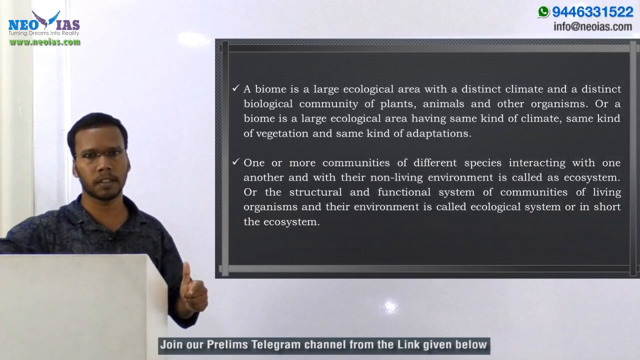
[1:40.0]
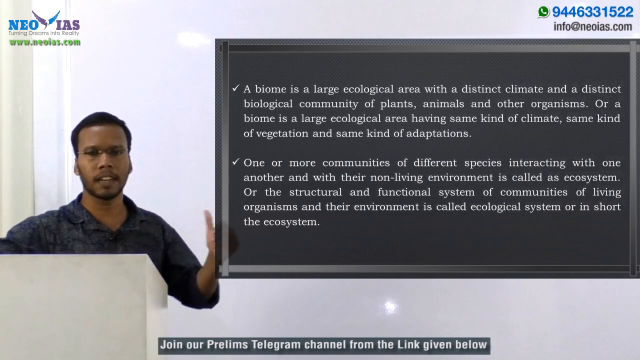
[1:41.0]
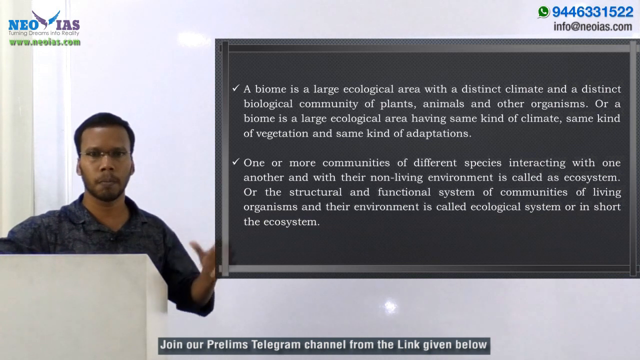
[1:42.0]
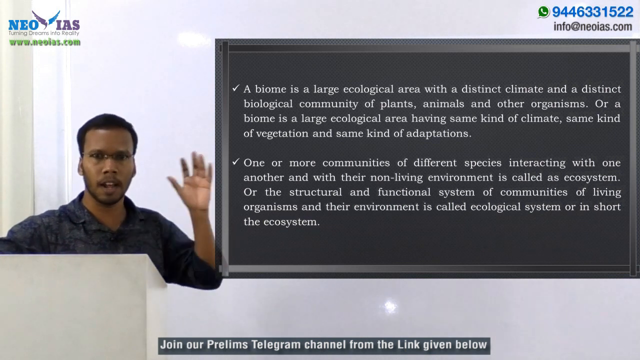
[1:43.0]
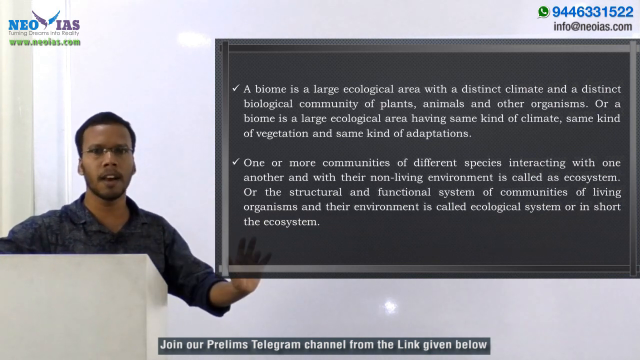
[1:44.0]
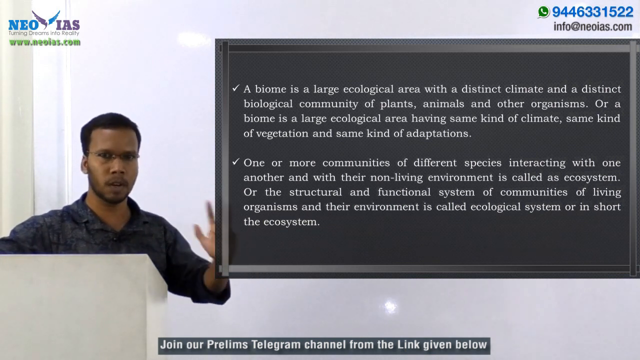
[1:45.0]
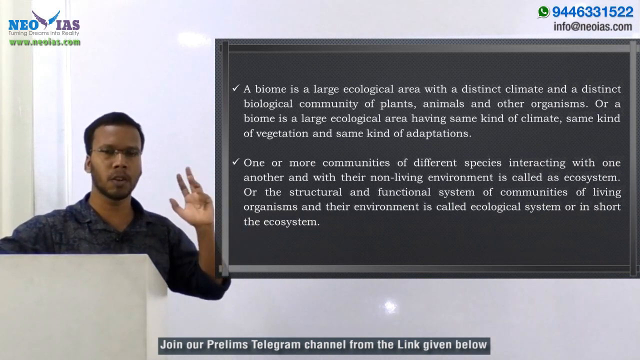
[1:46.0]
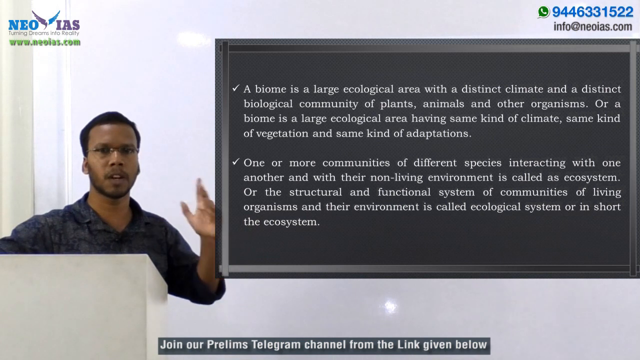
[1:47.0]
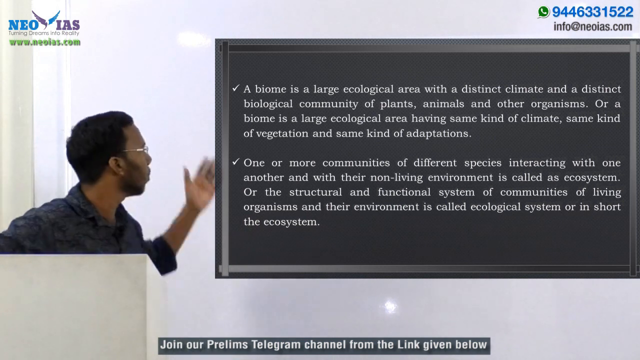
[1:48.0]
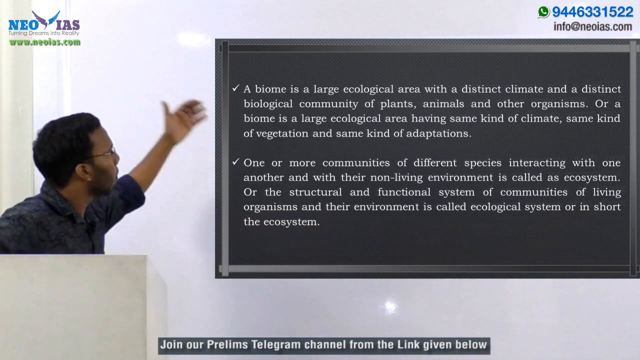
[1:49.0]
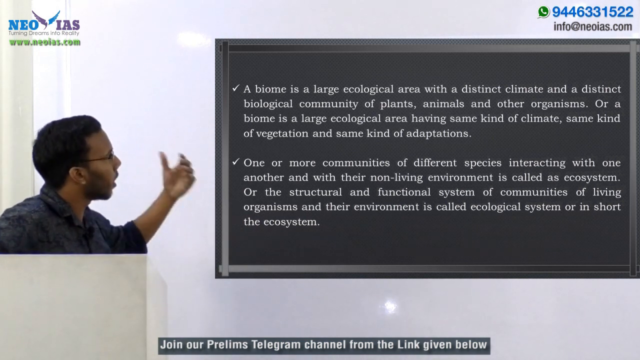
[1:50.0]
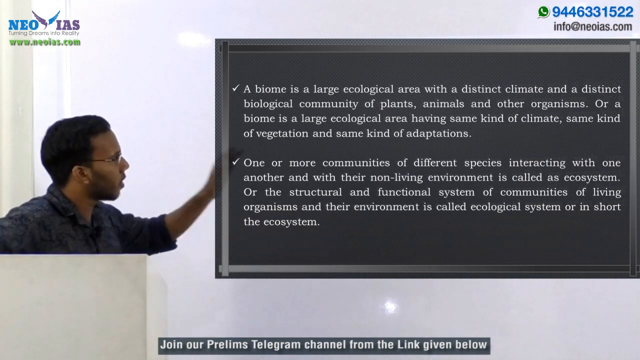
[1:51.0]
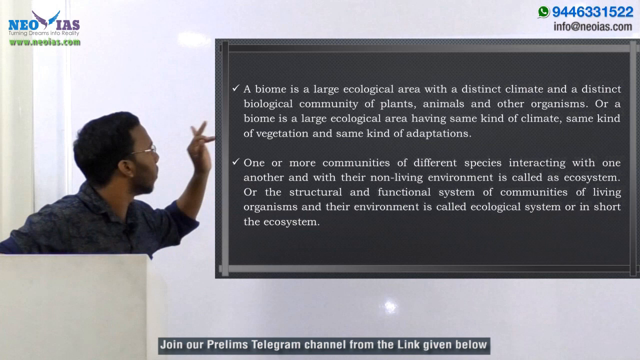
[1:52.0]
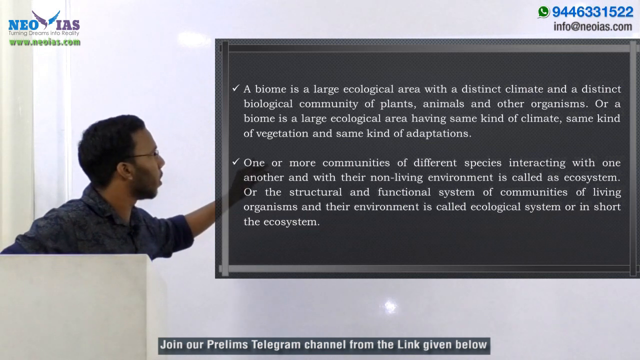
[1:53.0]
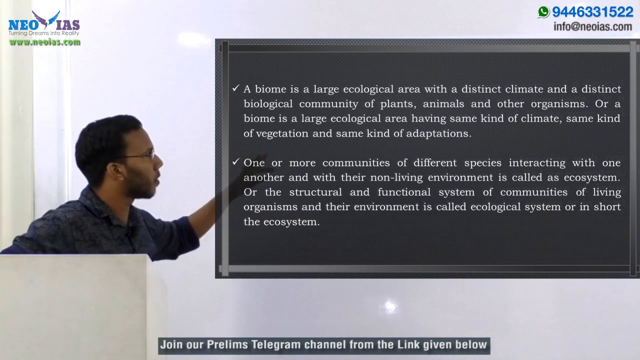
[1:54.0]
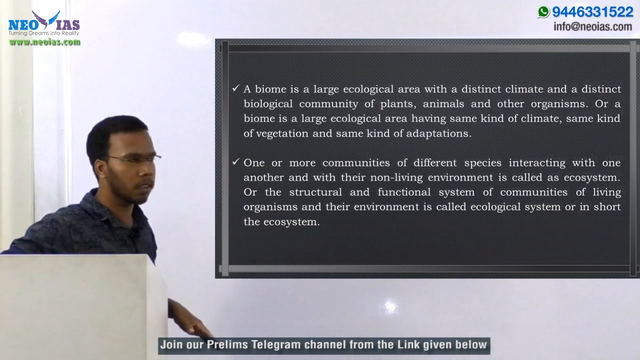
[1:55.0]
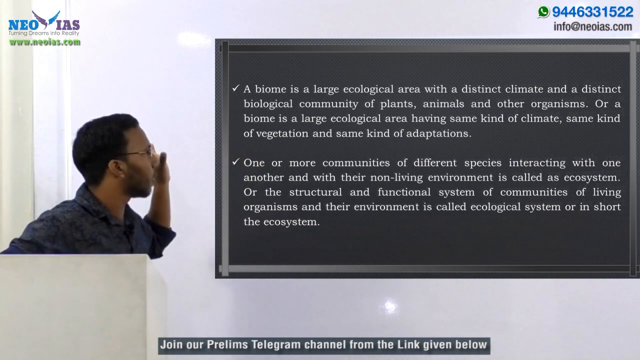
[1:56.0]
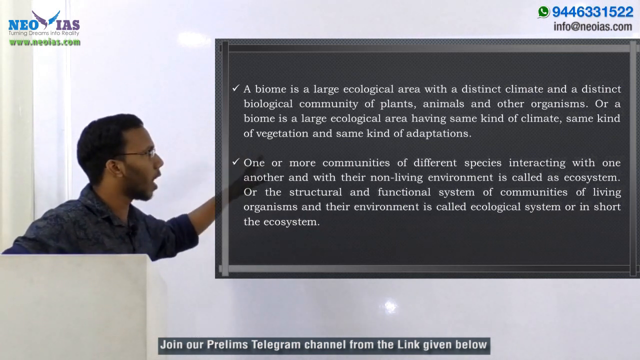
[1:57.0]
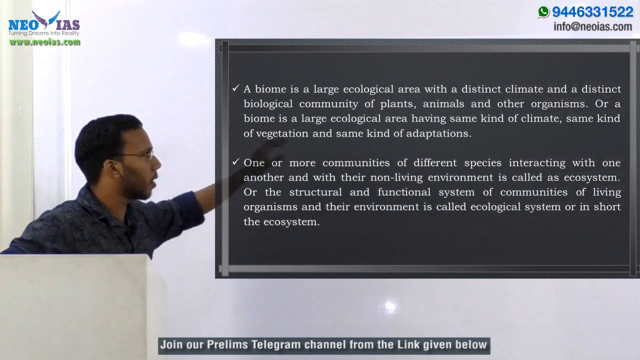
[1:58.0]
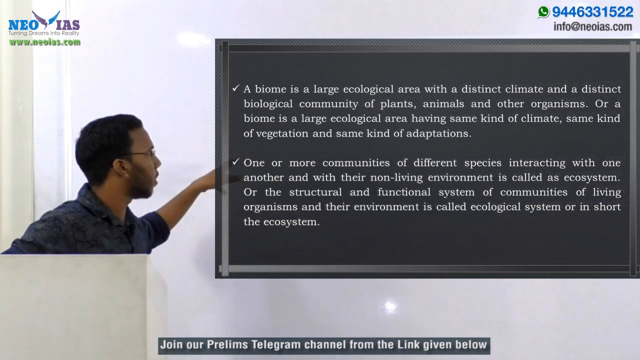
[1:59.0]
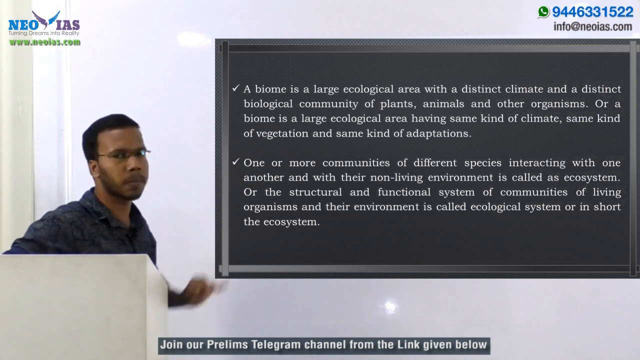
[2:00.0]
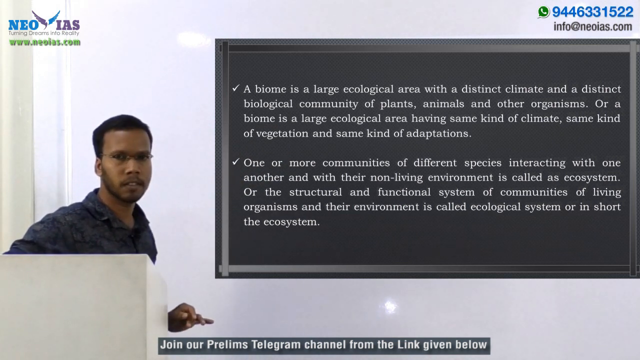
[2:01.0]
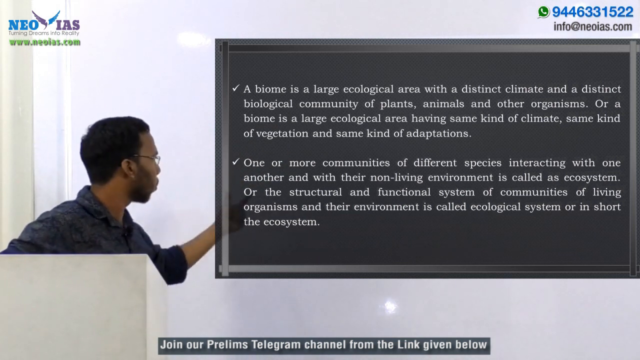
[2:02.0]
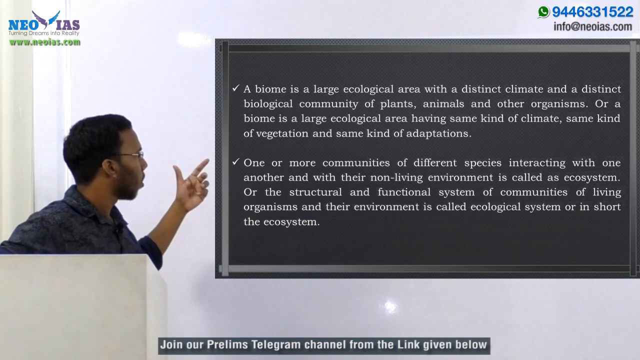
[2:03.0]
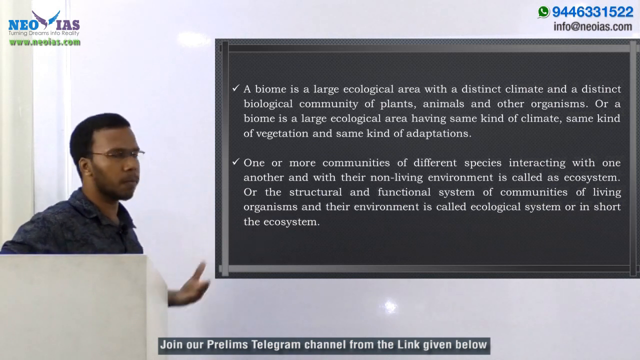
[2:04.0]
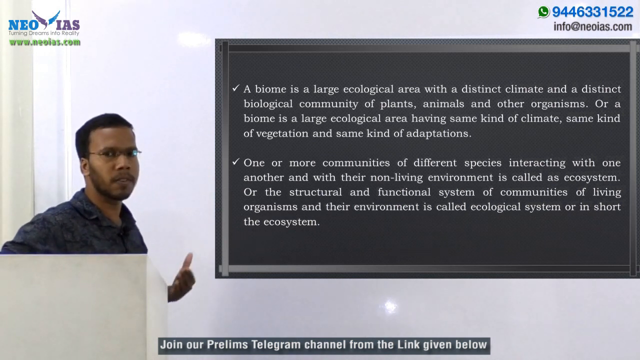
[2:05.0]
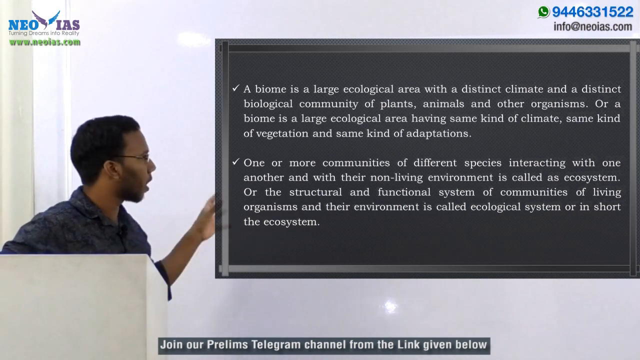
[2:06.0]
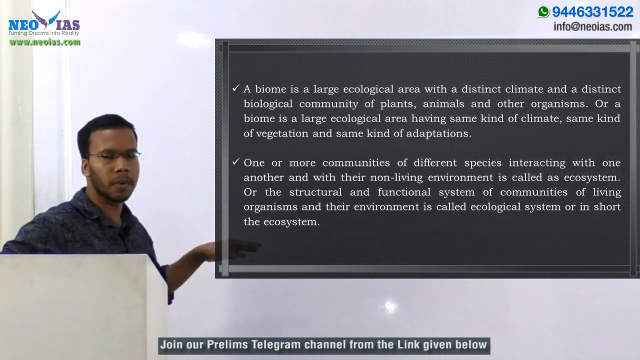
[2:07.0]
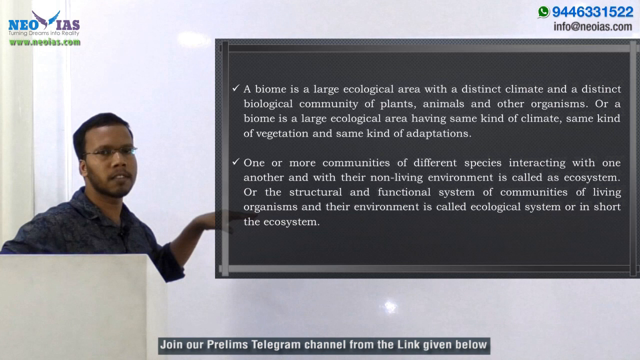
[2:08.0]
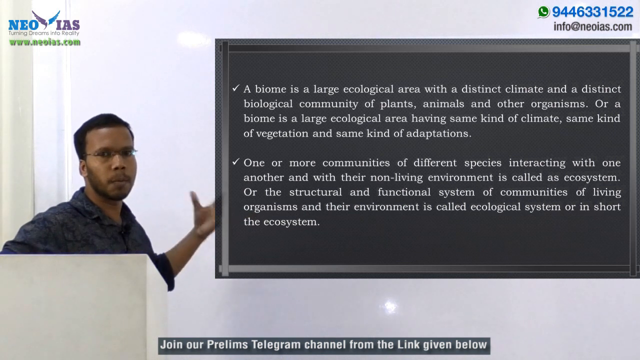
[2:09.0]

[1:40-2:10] The man turns, probably looking at something off-screen such as a green screen, the way weather presenters do. He places his hands at different parts of the writing, but his arm goes past where the board would be, passing behind it and partly disappearing, though some of his motion is still visible. He has a bit of a five o'clock shadow that starts at his sideburn and runs blockily down a little past his jawline toward his neck. His eyes point to the left and he is turned that way as he speaks. He curls his hands and reaches toward different spots on the board, holding his thumb and a finger together to point at different places. He then makes good eye contact with the camera while gesturing off to the left.